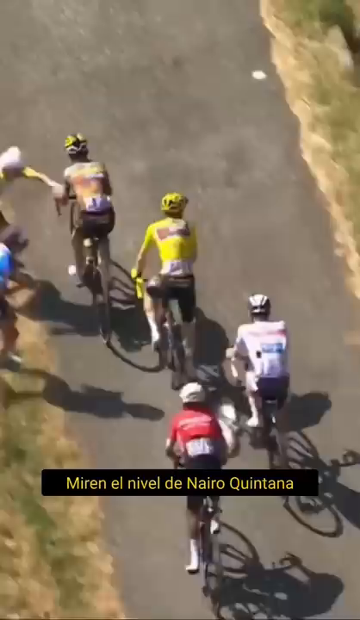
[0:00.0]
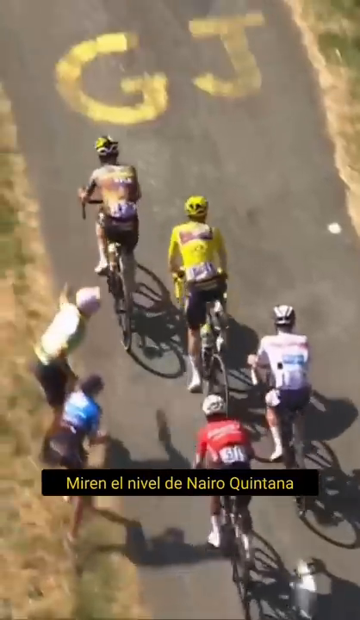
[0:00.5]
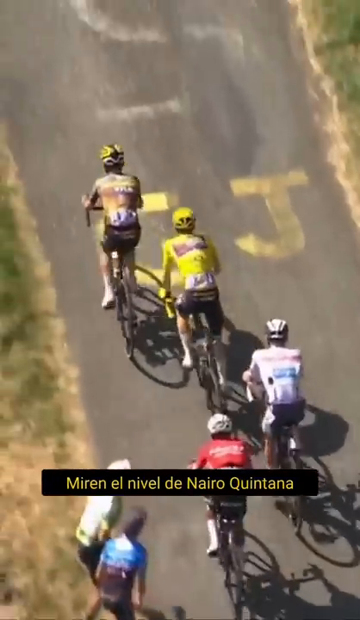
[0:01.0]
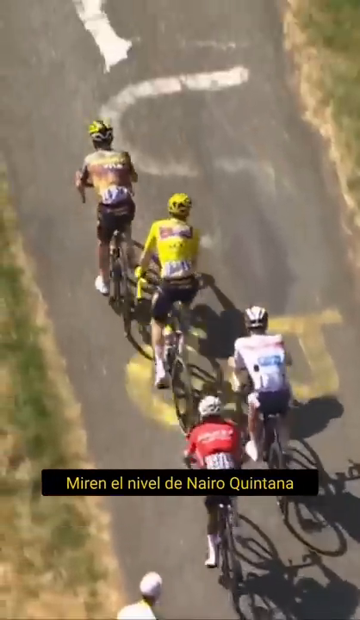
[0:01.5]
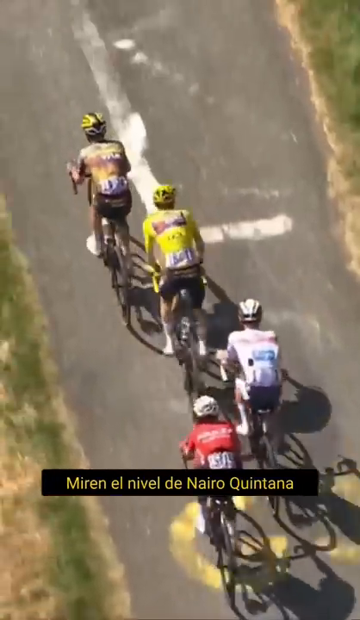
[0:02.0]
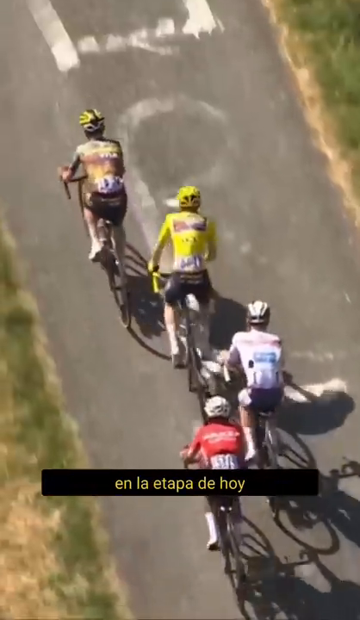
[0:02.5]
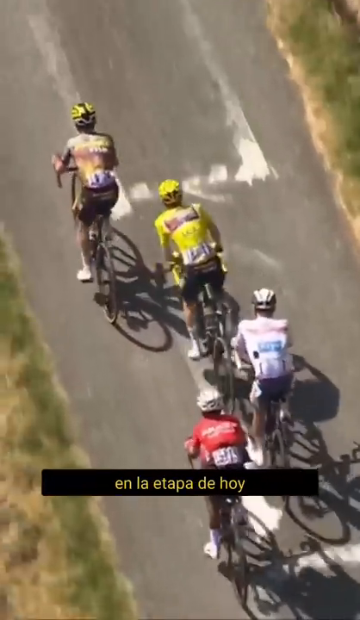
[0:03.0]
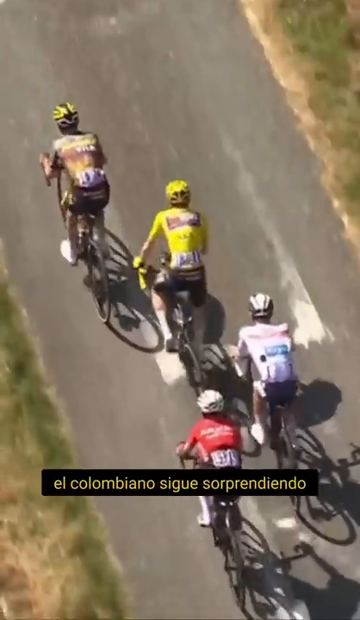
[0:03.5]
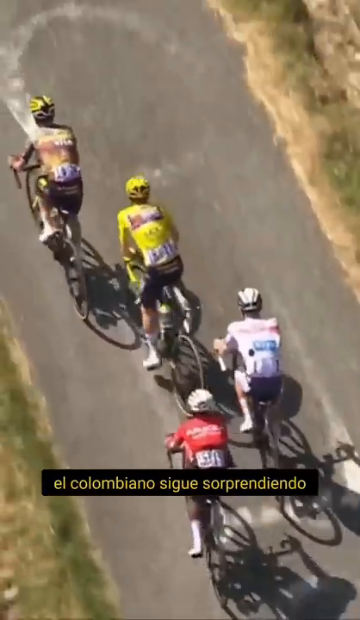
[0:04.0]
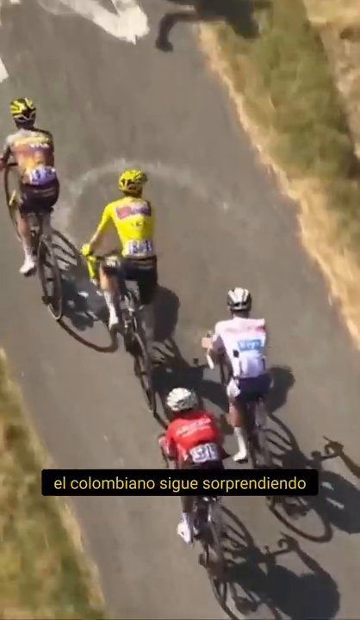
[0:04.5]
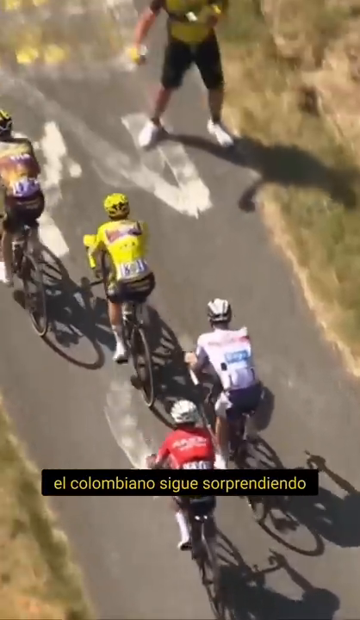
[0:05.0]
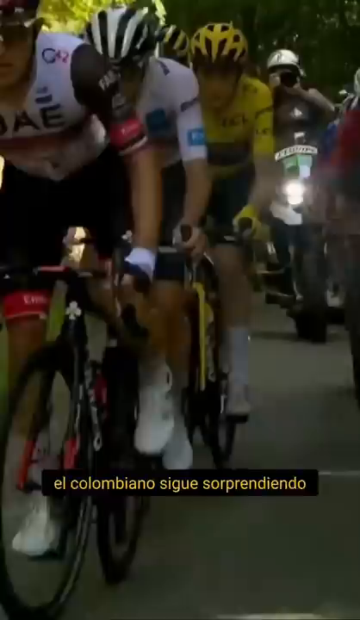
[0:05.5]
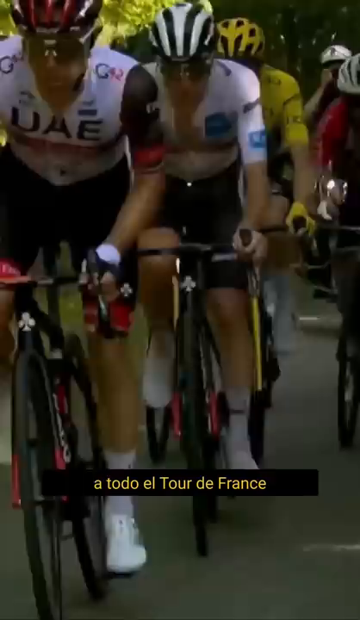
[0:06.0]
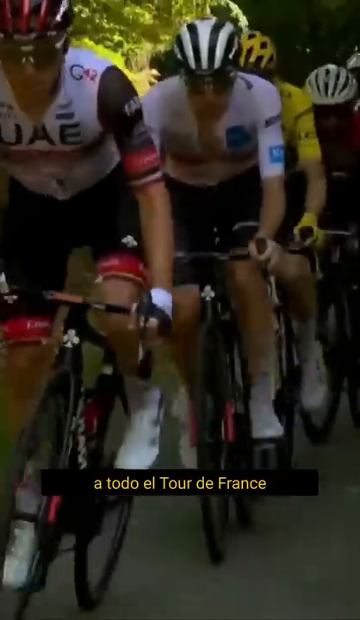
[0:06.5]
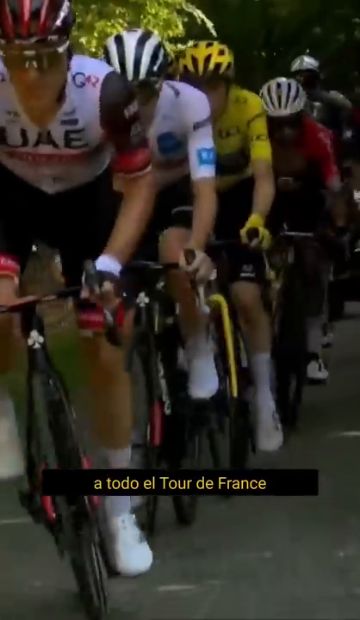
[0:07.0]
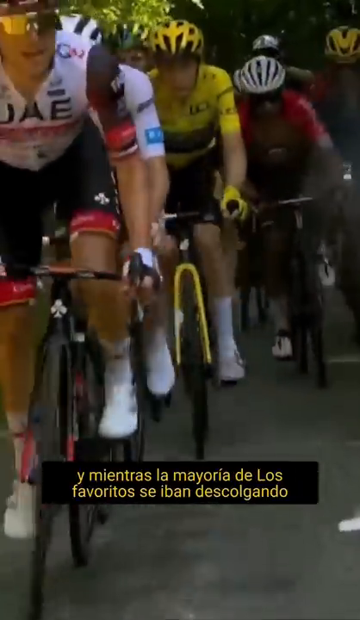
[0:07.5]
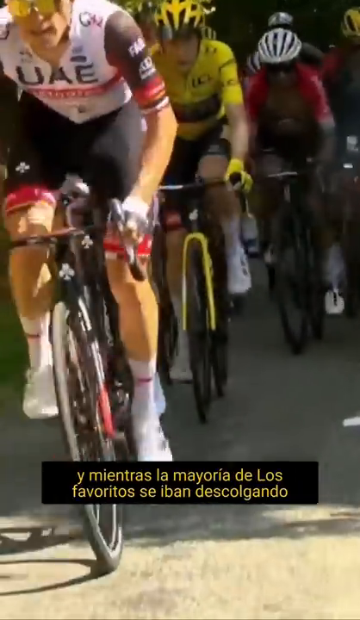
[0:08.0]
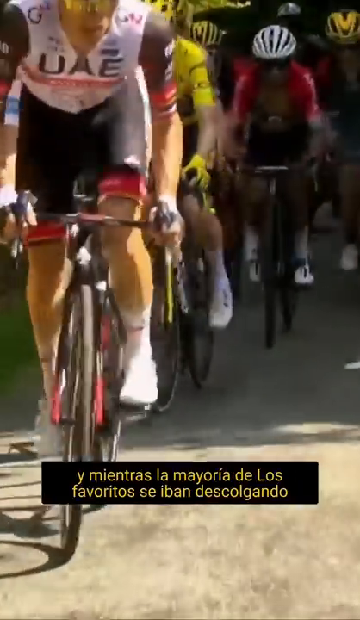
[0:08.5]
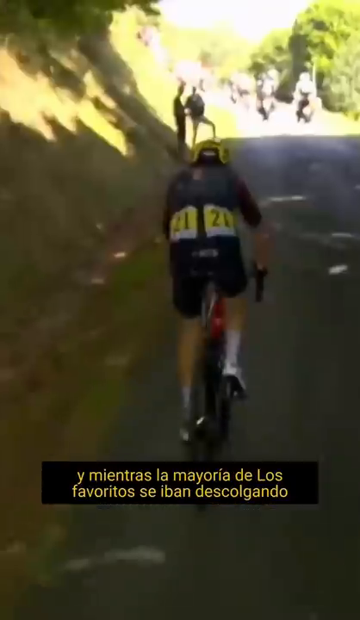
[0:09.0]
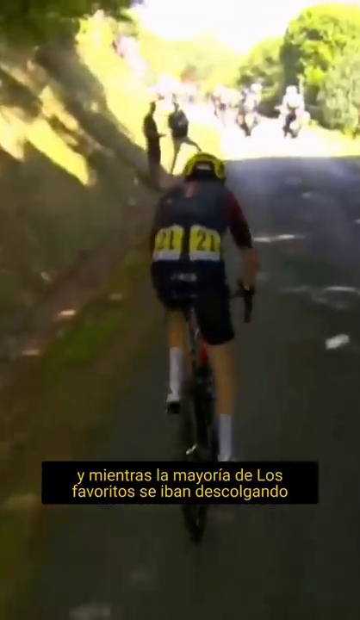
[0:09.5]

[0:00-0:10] What looks to be a bike race is underway, with bikers racing on a concrete path while spectators on the side cheer them on. A caption in Spanish appears over the video, written in yellow on black banners. A closer shot shows another race, with the bikers pedaling hard. Next, a single rider appears with the number 21 on his back twice; he wears long white socks and a black outfit. This last shot is very blurry compared to the others.